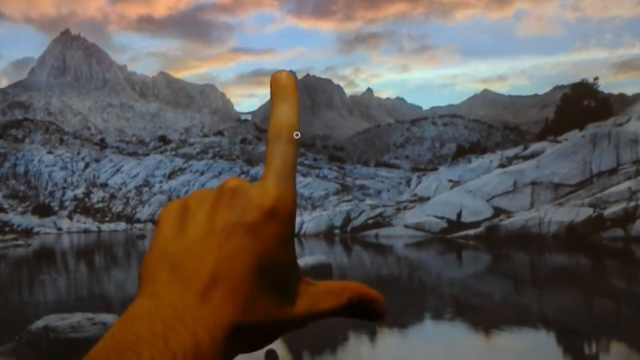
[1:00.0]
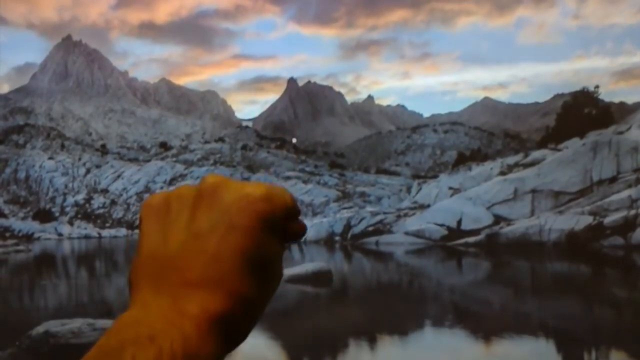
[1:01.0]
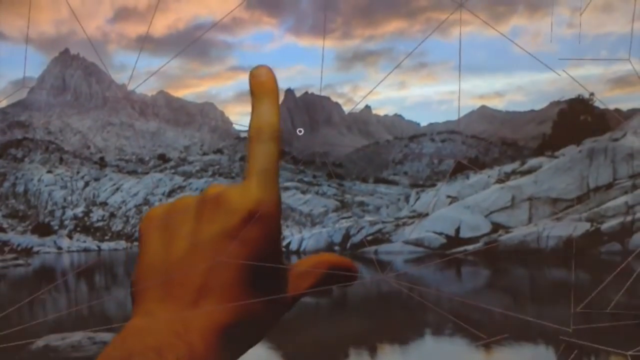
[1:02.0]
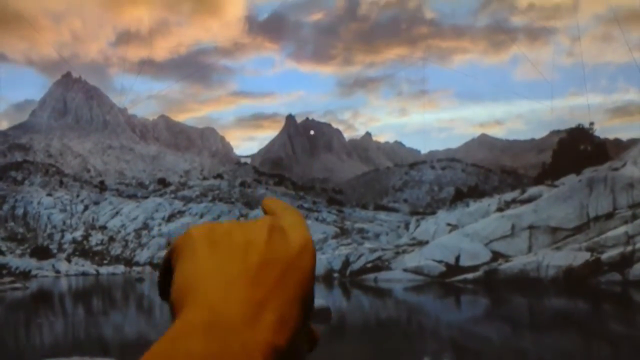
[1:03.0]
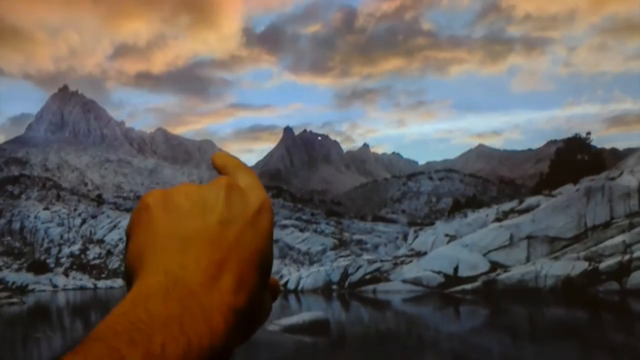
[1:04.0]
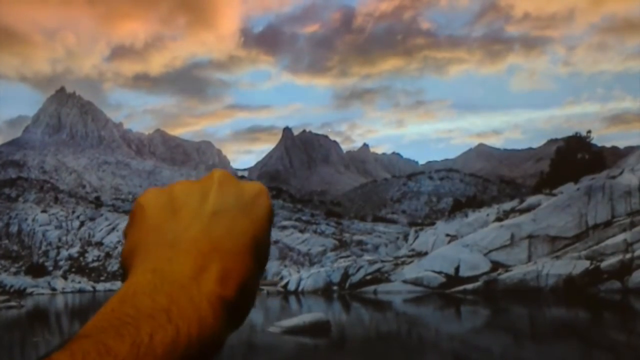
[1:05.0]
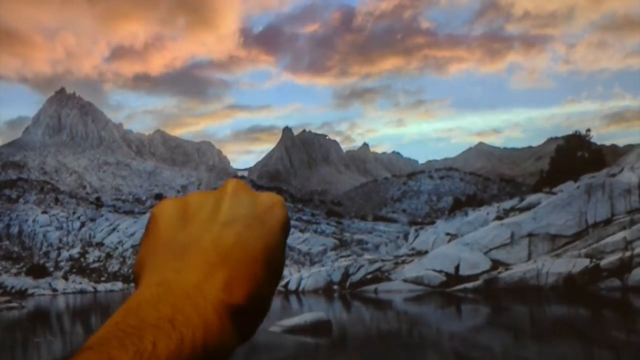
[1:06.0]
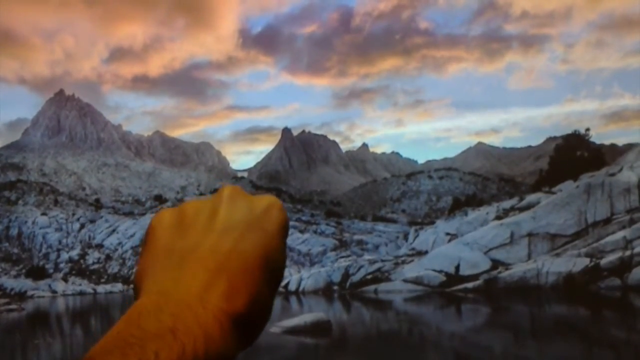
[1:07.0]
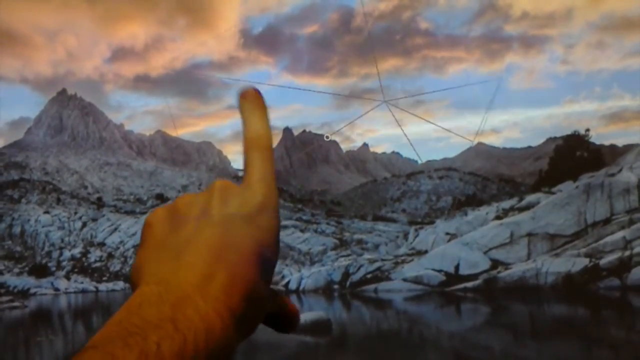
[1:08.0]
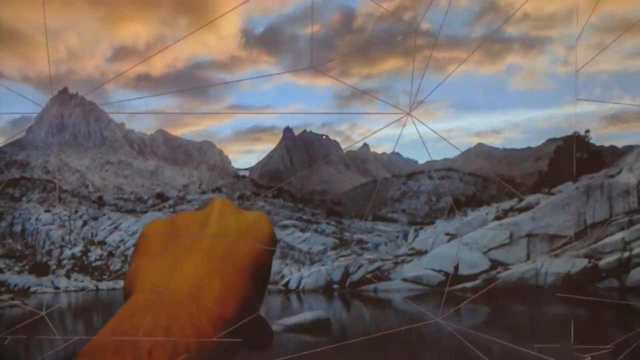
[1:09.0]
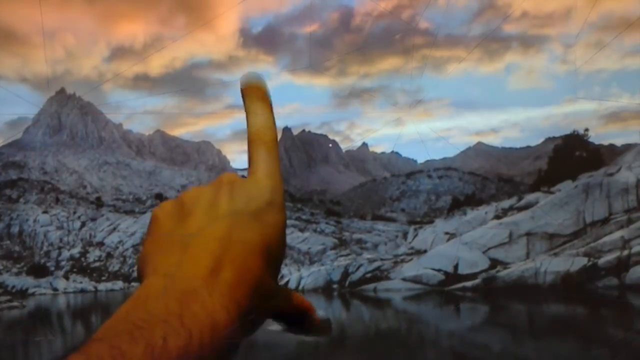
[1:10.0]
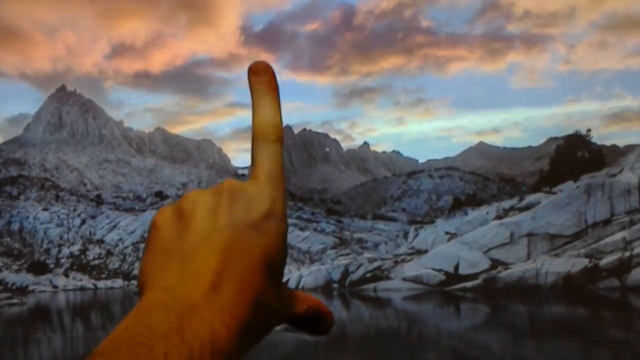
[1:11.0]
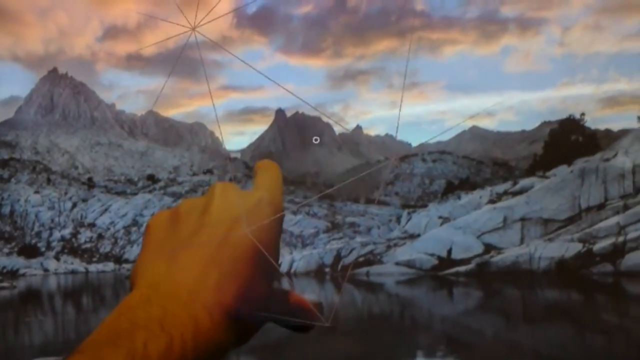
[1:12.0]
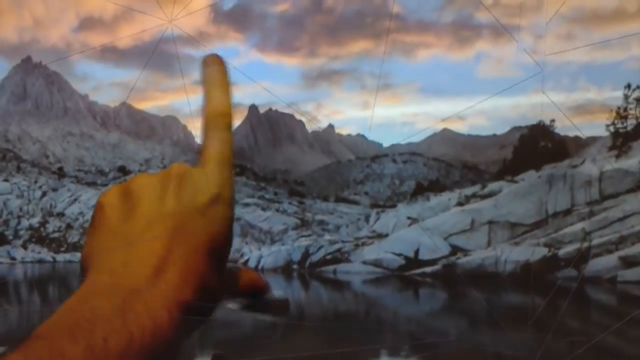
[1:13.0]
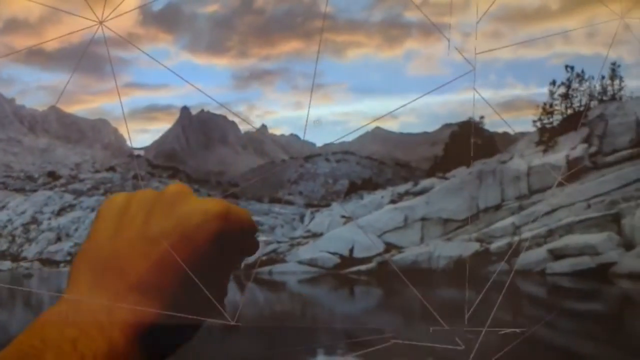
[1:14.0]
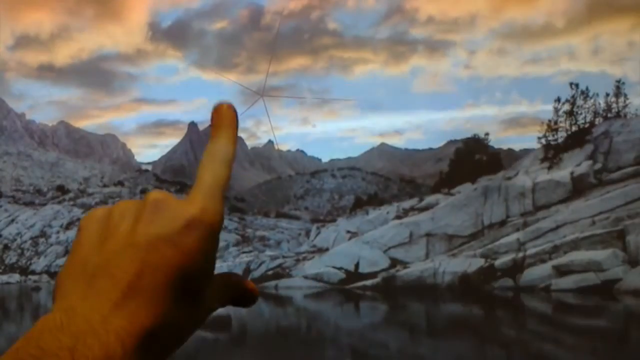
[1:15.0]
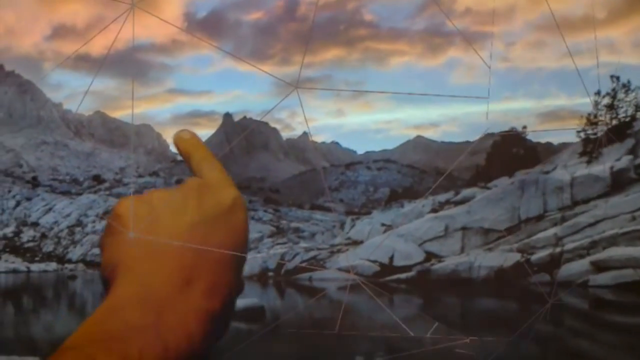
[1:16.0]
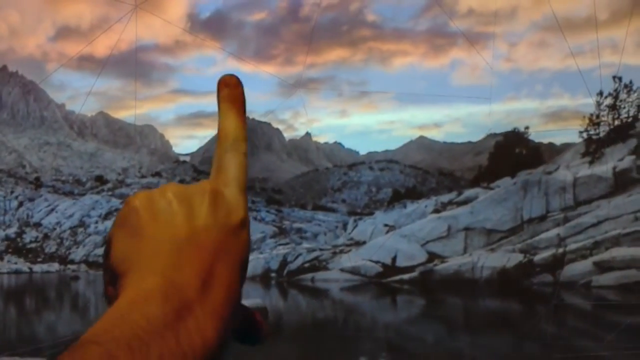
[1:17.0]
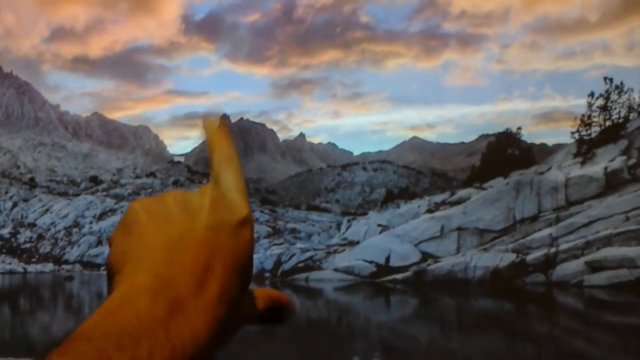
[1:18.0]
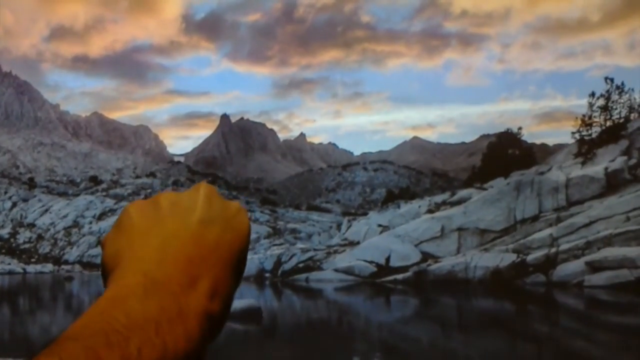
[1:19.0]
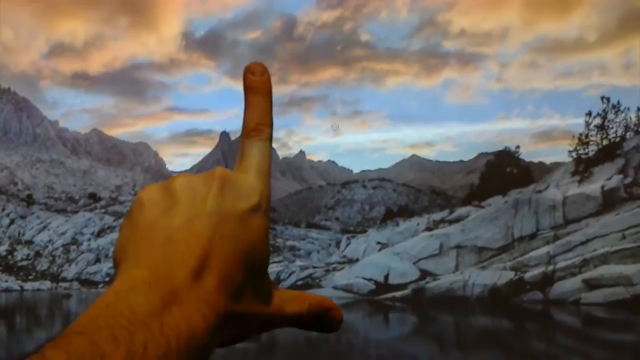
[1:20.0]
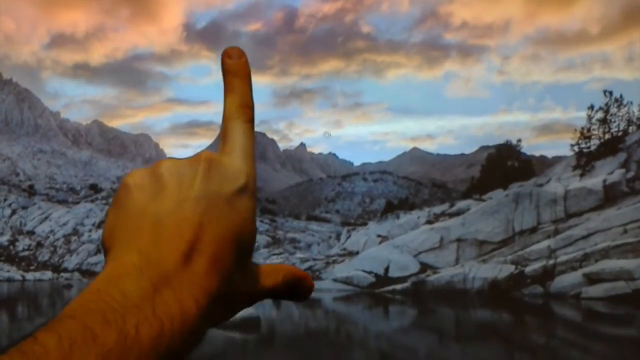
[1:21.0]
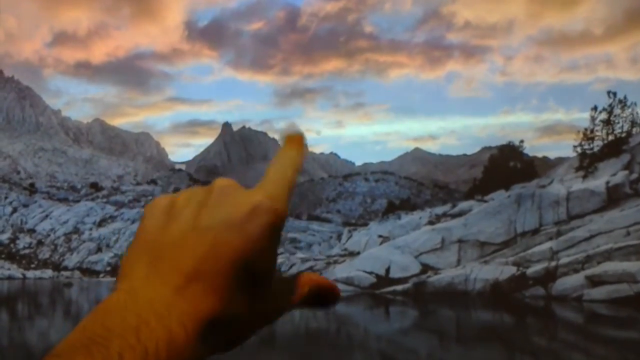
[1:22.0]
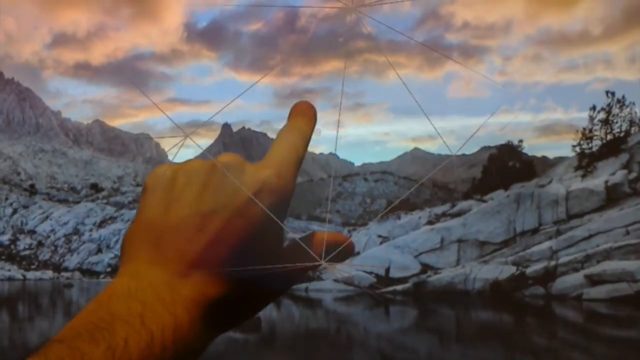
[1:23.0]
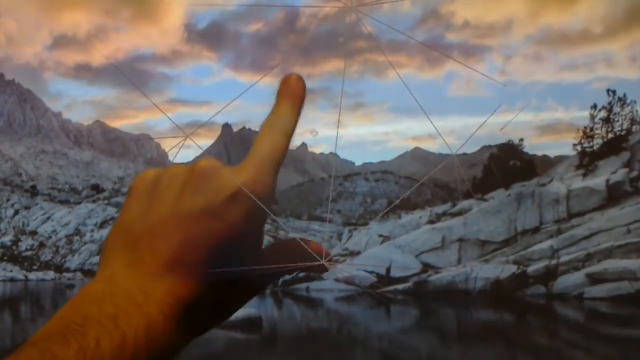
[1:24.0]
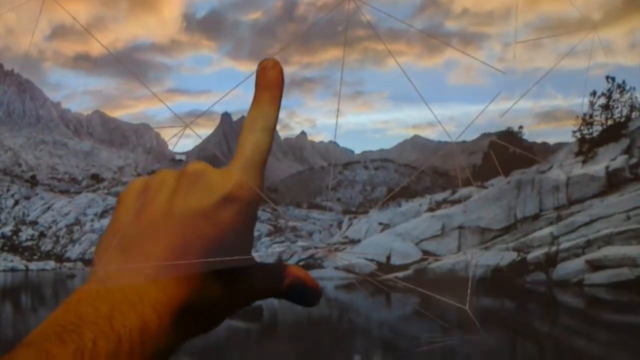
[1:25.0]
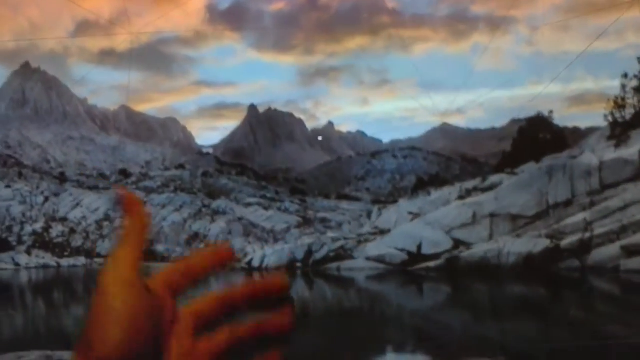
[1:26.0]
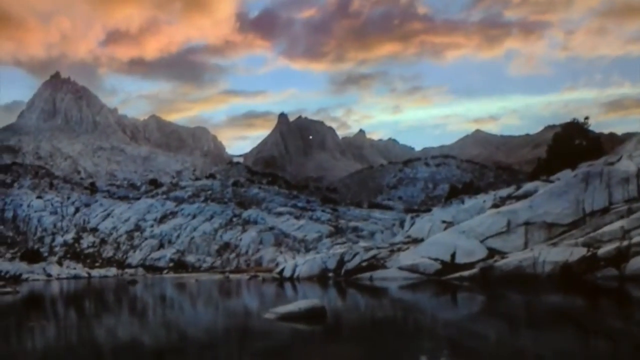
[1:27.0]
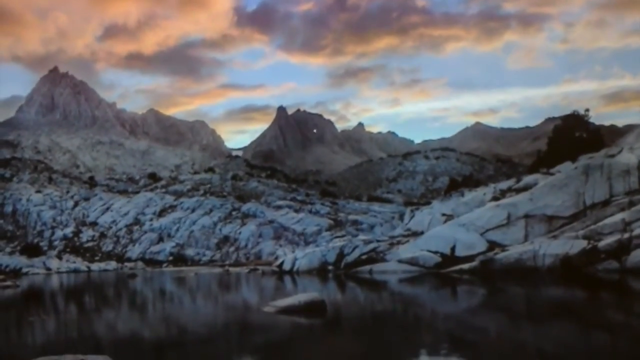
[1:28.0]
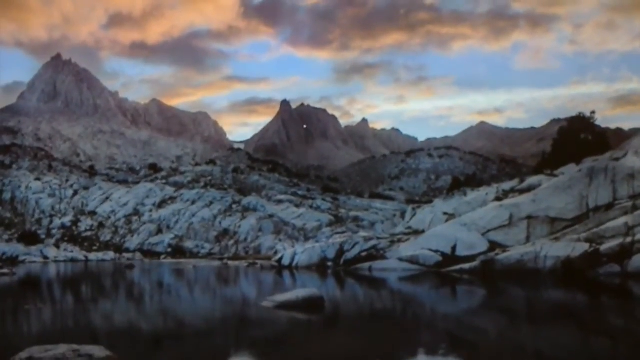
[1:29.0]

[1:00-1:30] The scene shows what looks like a body of water in front, snowy ground rising into hills on the left and right, mountains in the background, and a light blue sky with some clouds. A hand extends from the bottom left toward the middle with what looks like the index finger and thumb extended and the other fingers closed in a fist. When the index finger and thumb pinch together, many thin lines flash over the video, apparently forming polygon shapes. The hand then points downward a bit with the fingers facing away, so the index finger and thumb are barely visible; it pinches around five times and nothing happens. The hand makes exaggerated movements, opening the index finger and thumb very wide and then downward, and pinches with the fingers pointed away and not visible, again with nothing happening. When the hand is turned a little to the right so the index finger and thumb can be seen connected to the hand, it pinches and the polygons appear. The hand then appears to open its palm and make a gesture, and the view looks around left and right. The sequence seems to demonstrate that the index finger and thumb need to be visible from the side for the pinch to make the polygons appear.